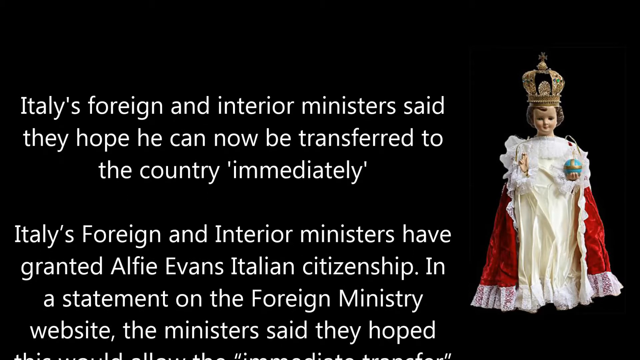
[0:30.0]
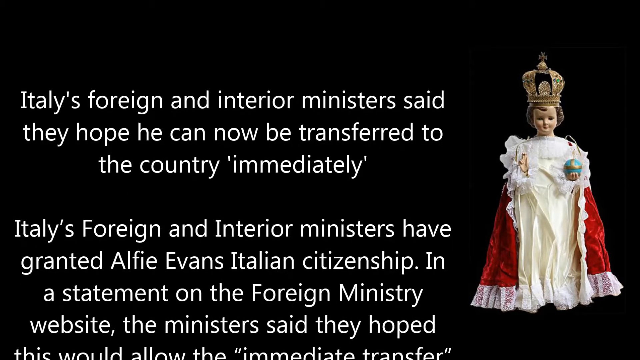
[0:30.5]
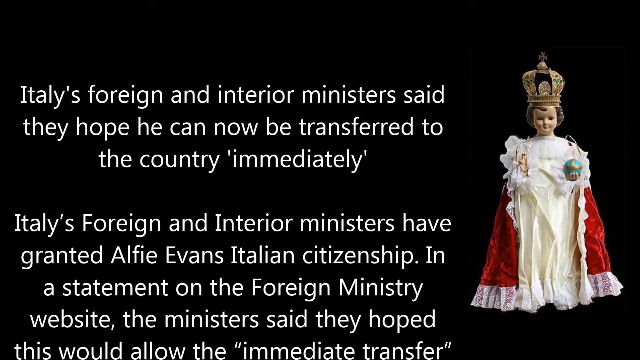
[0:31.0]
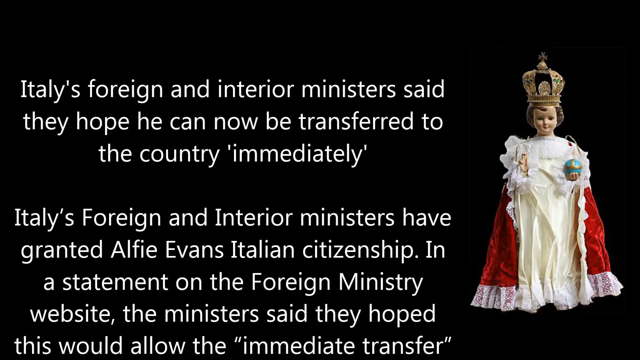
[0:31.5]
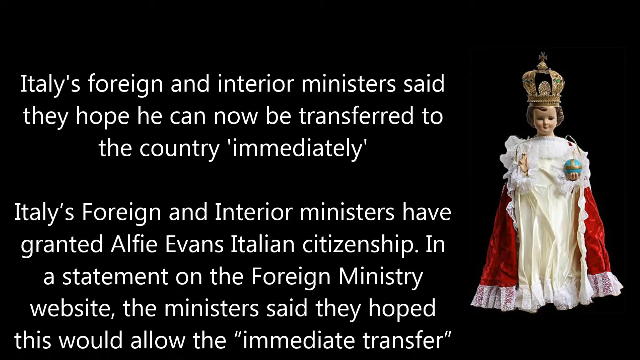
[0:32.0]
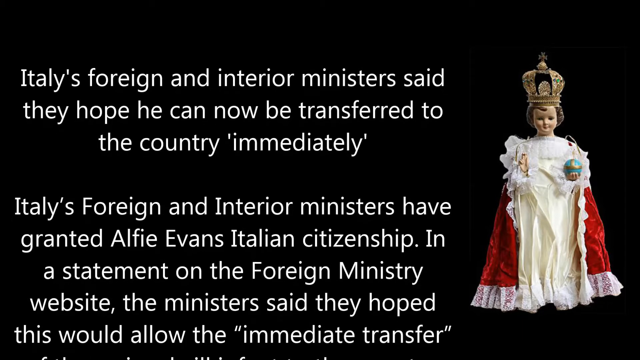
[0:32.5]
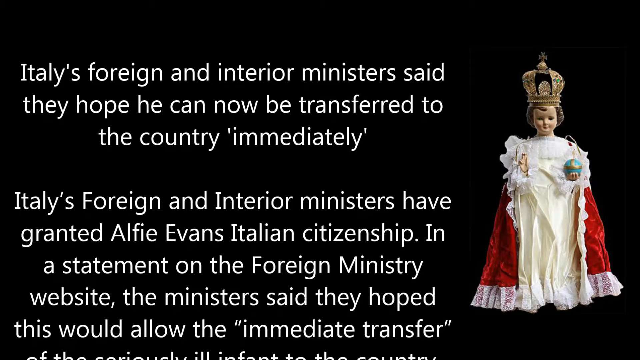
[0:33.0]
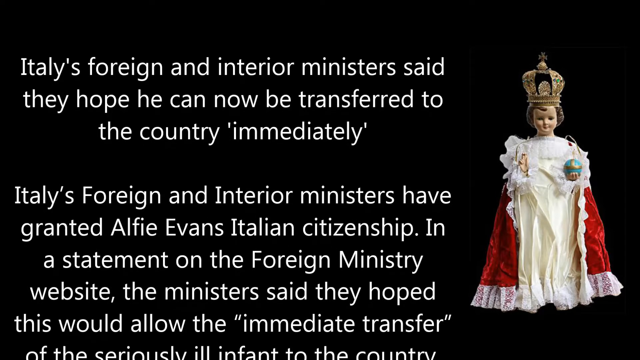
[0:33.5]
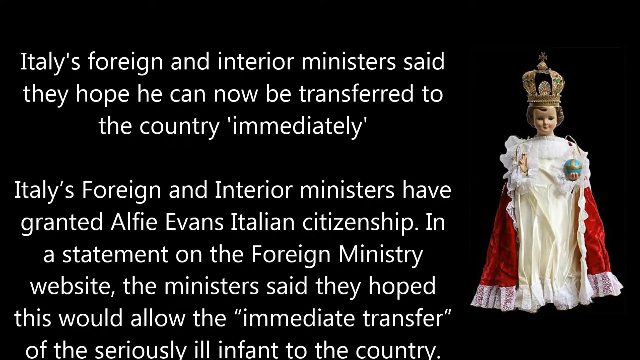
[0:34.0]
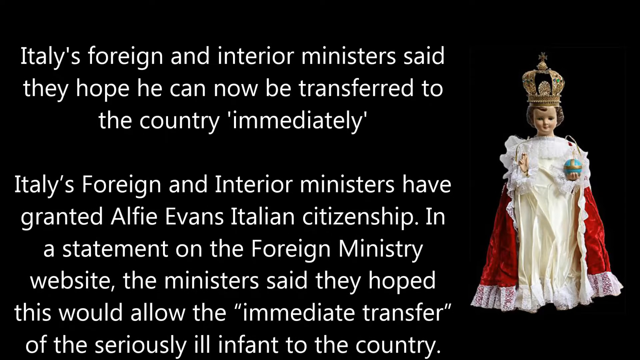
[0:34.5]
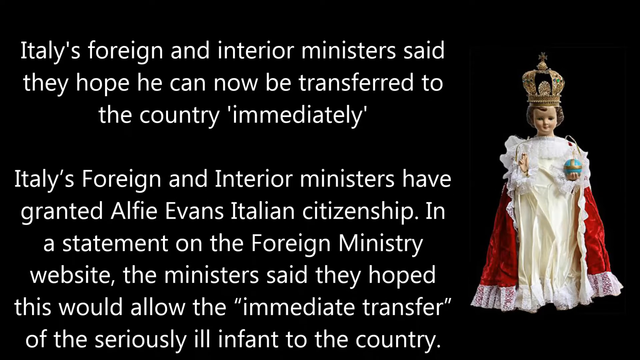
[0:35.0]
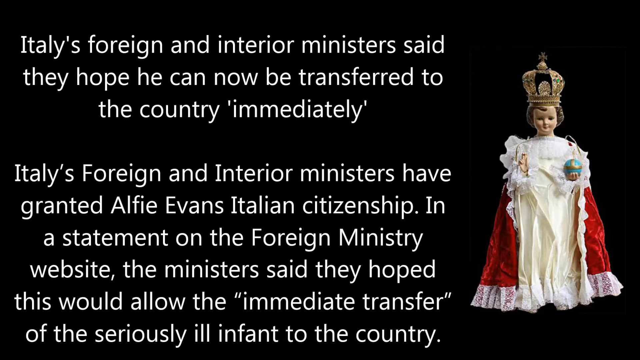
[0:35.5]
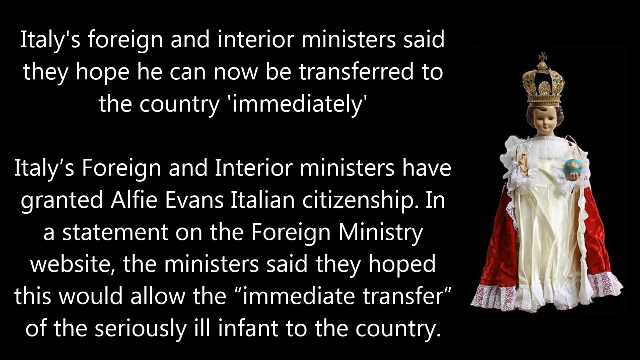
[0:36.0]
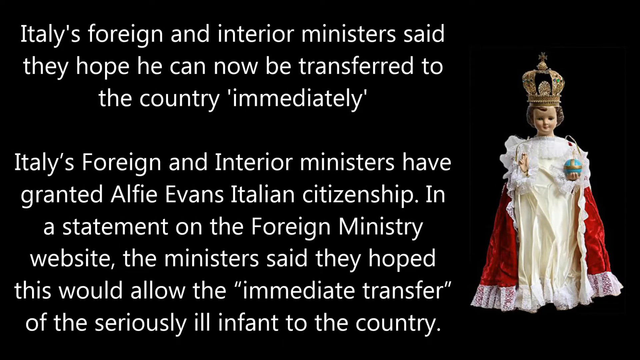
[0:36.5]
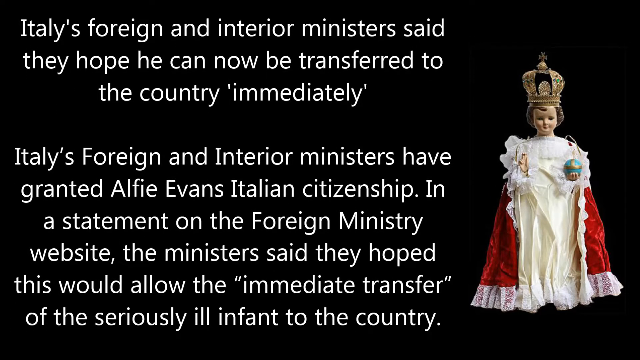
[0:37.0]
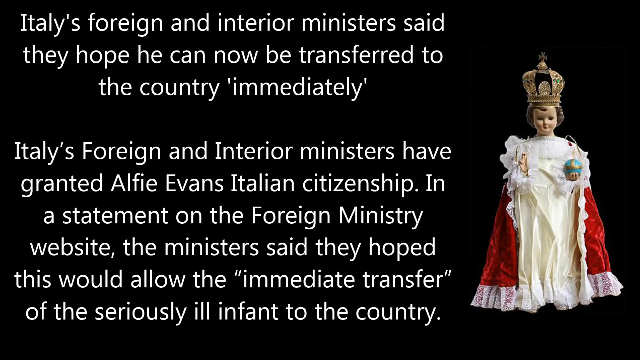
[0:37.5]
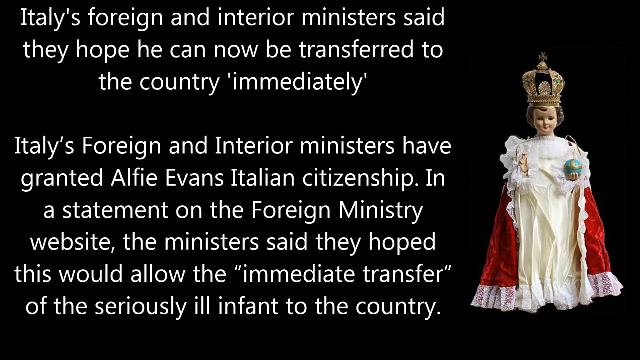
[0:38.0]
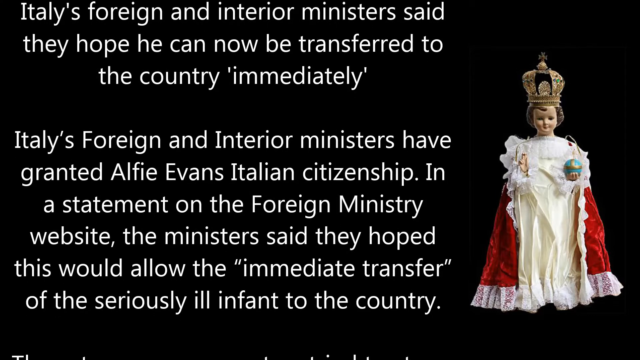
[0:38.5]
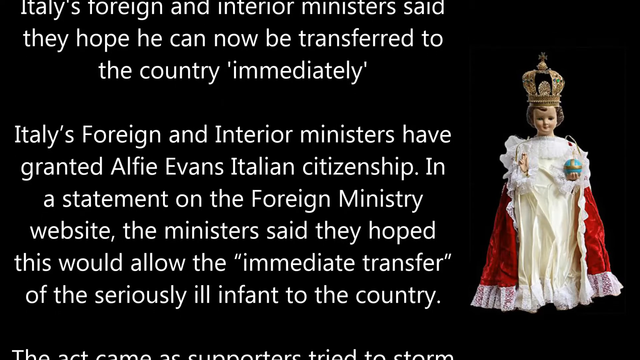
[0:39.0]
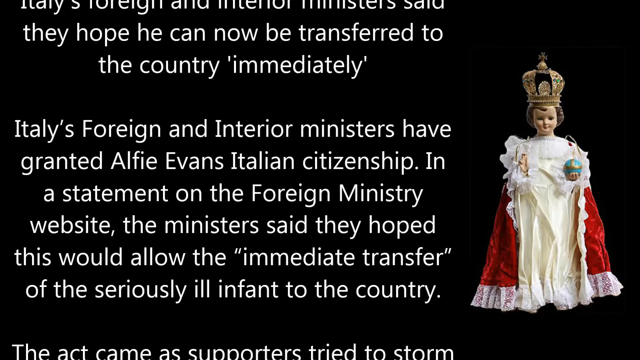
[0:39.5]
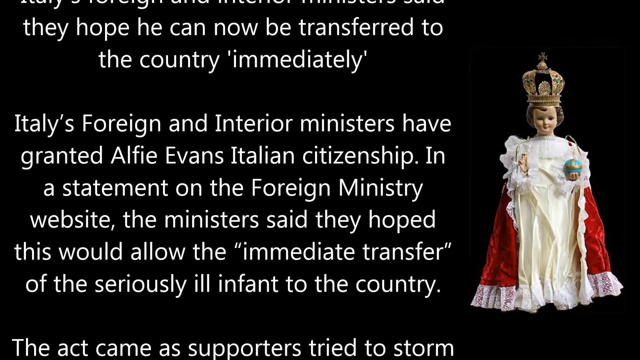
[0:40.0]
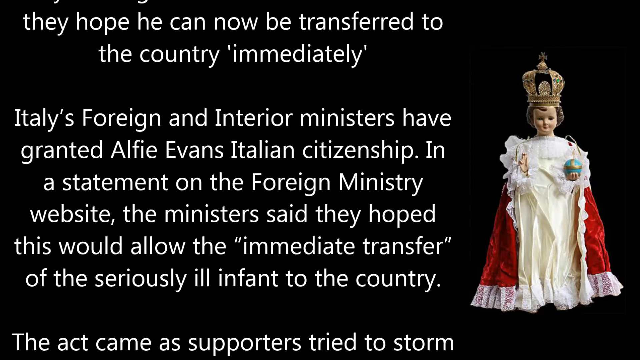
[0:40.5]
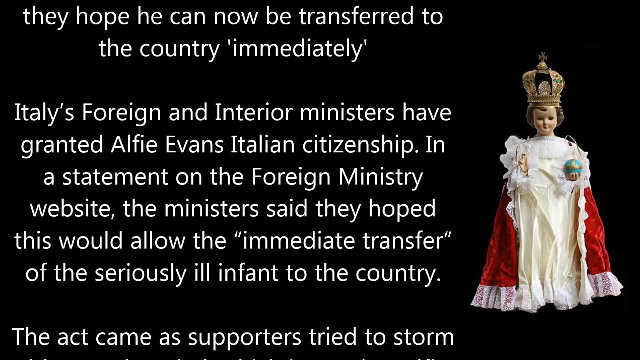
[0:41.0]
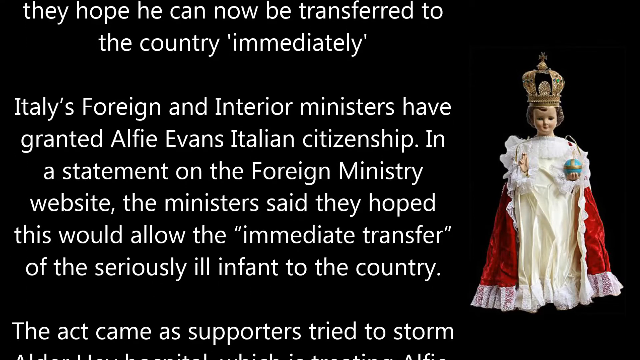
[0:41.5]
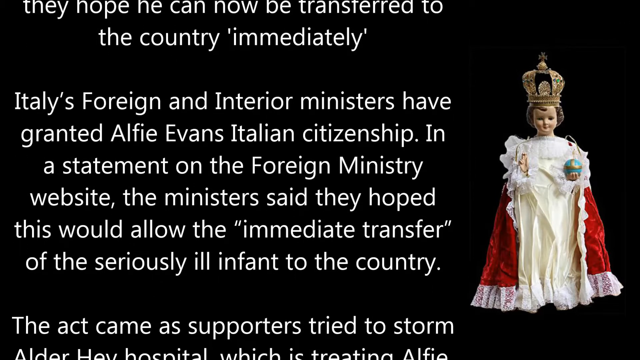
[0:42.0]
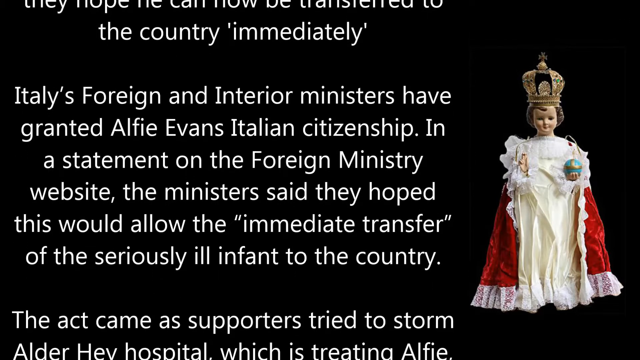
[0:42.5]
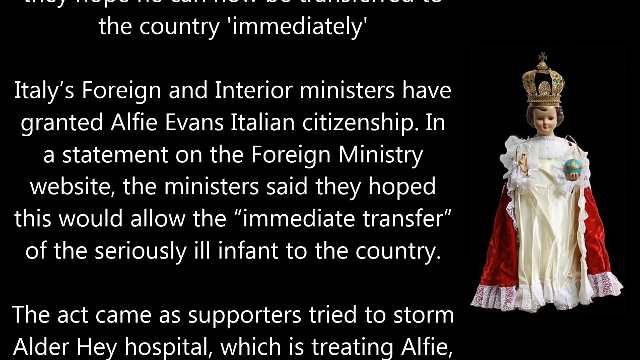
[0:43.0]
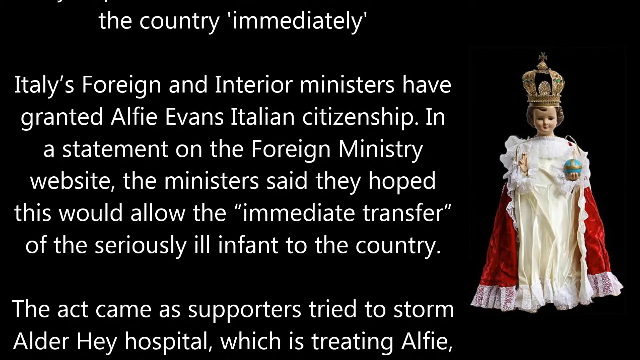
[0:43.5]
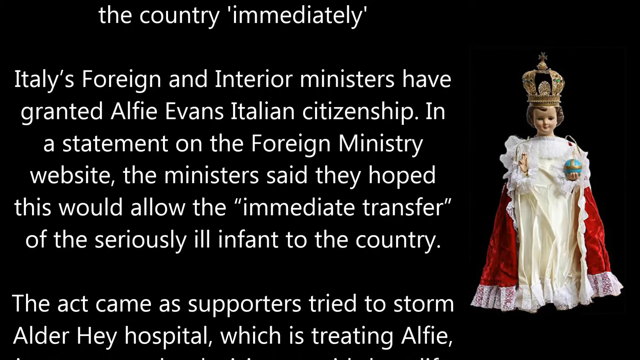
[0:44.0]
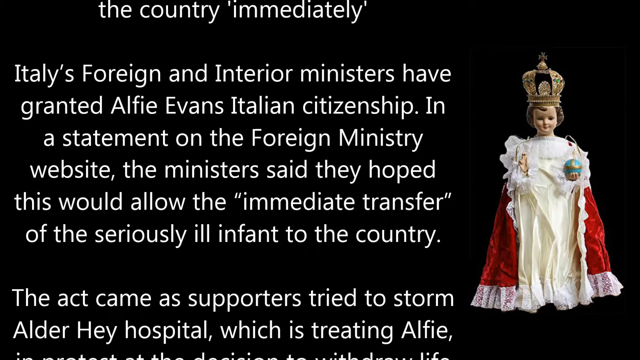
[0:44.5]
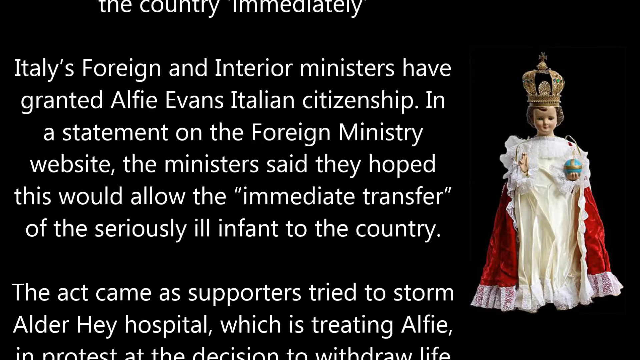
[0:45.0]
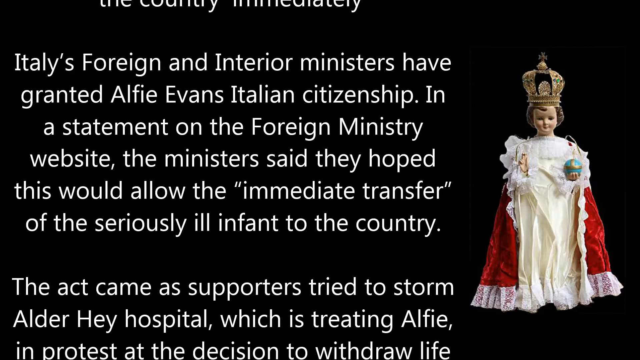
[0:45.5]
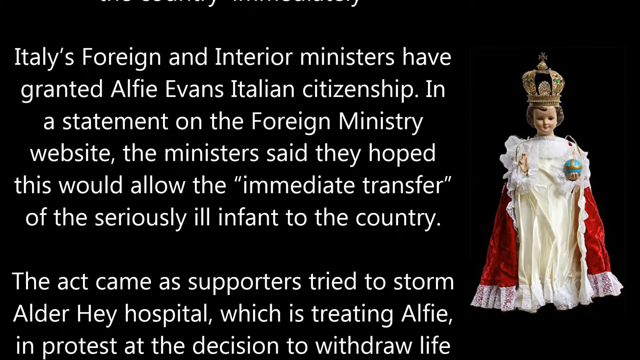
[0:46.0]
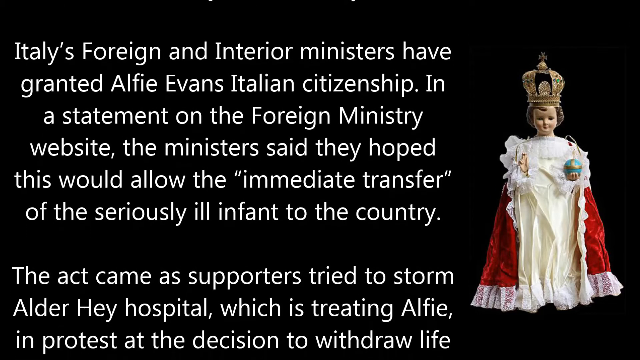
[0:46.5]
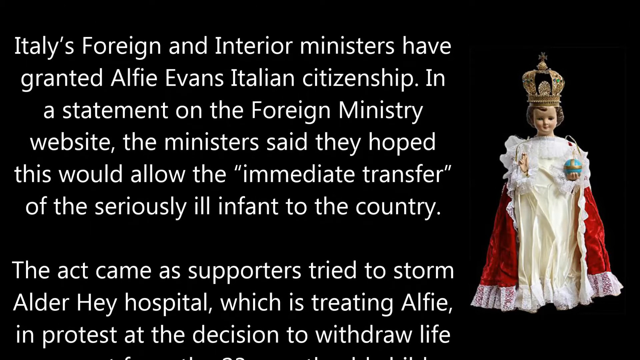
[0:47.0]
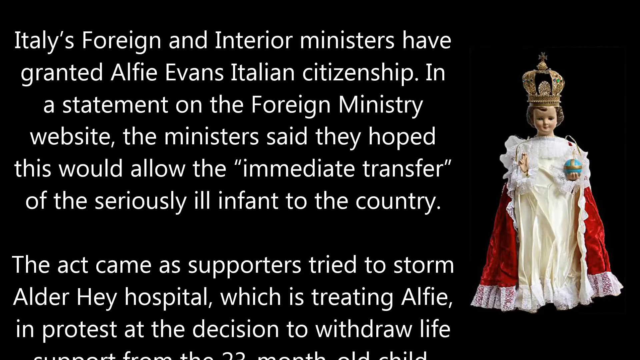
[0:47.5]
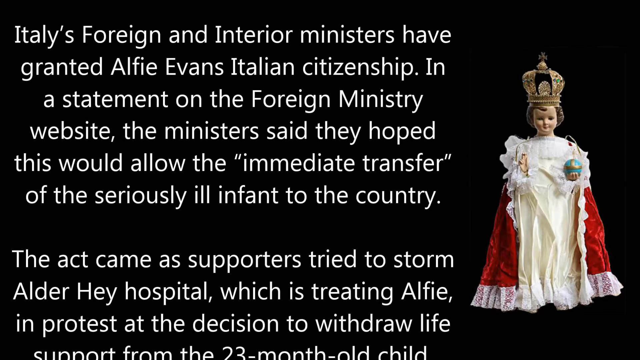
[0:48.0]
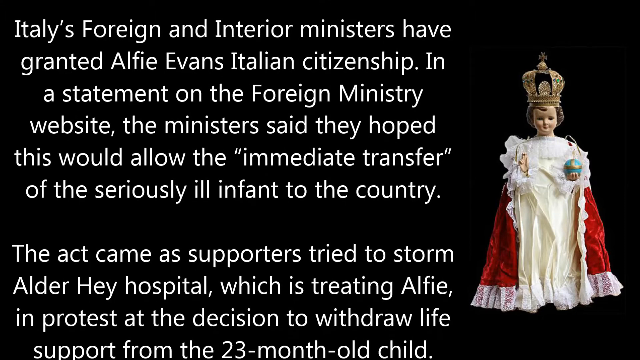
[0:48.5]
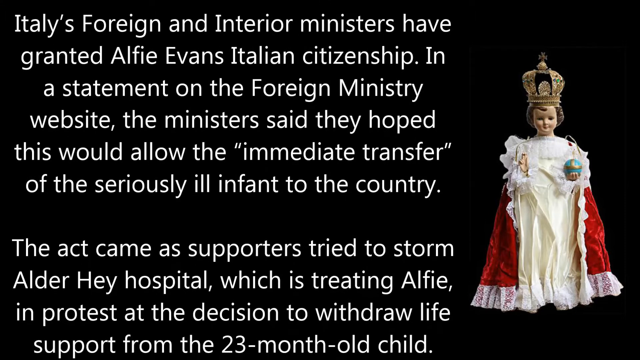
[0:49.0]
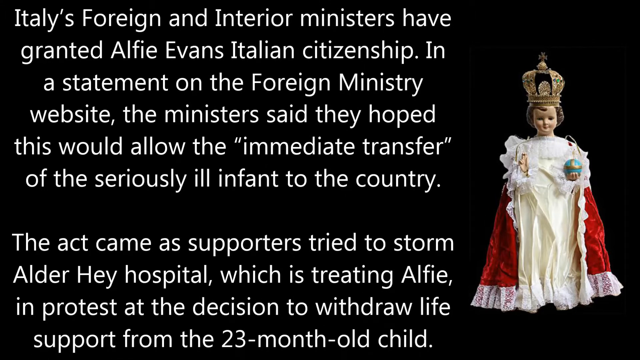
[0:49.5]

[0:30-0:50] On a black background, white font scrolls upward, with a doll in a king's dress or queen's dress to the right of the screen. The text states "Italy's foreign and interior minister said they hope he can now be transferred to the country 'immediately'," with "immediately" in quotation marks. The next paragraph reads "Italy's foreign and interior ministers have granted Alfie Evans Italian citizenship in a statement on the foreign ministry website. The minister said they hope this would allow the 'immediate transfer' of the seriously ill infant to the country," with "immediate transfer" in quotation marks. The text continues to scroll up the screen, and the next paragraph in white font begins "The act came as supporters tried to storm Alder Hay hospital which is treating Alfie in protest at the decision to withdraw life support from the 23-month-old child."